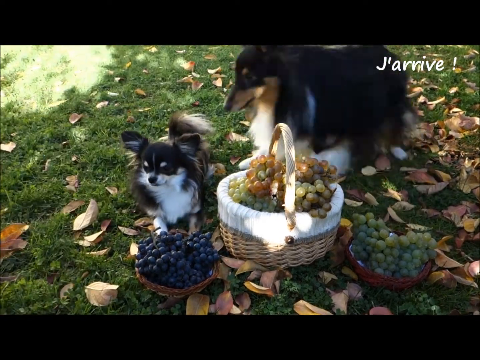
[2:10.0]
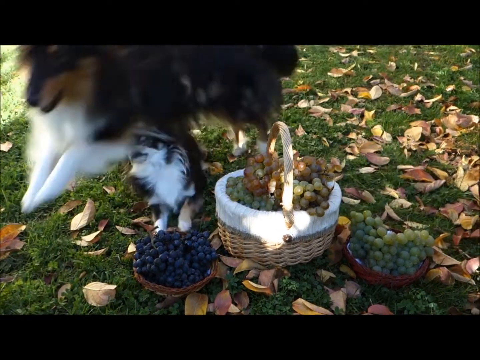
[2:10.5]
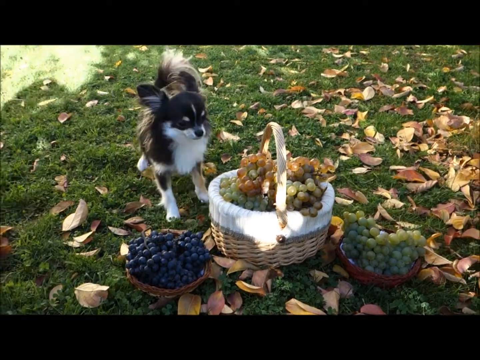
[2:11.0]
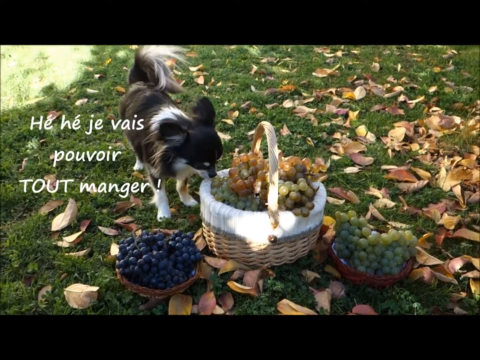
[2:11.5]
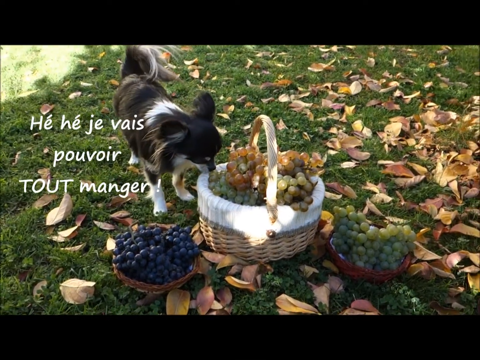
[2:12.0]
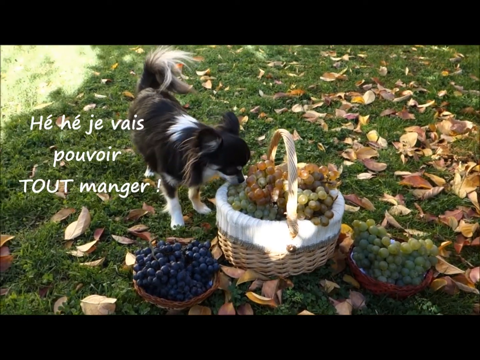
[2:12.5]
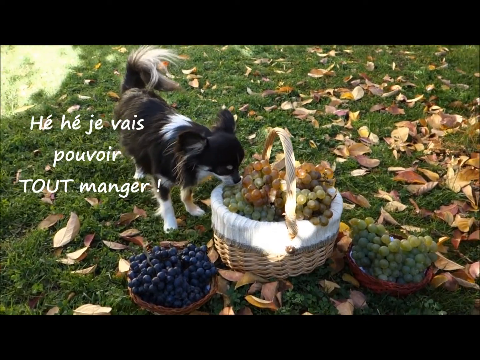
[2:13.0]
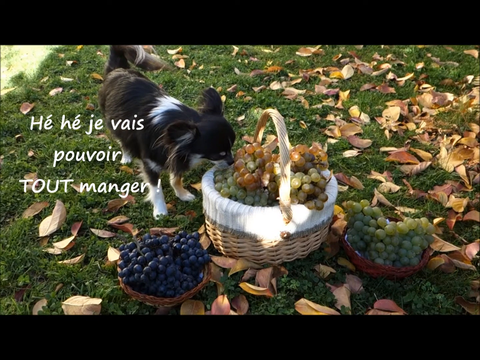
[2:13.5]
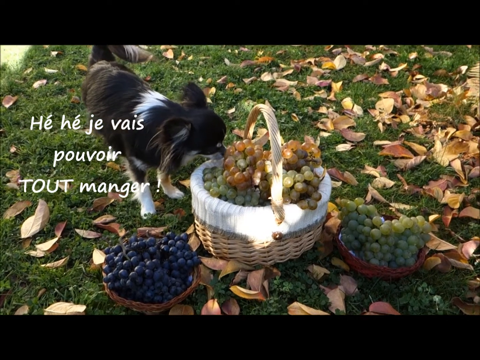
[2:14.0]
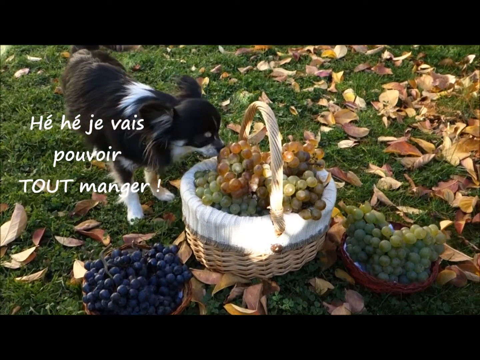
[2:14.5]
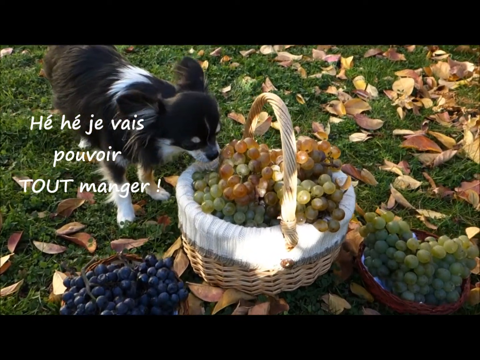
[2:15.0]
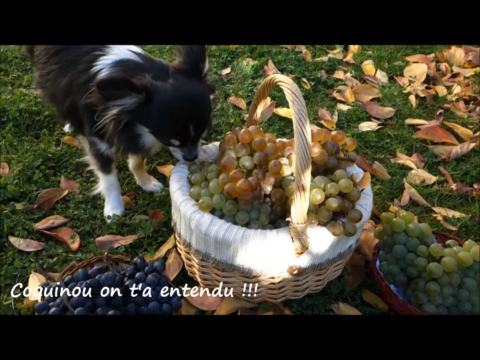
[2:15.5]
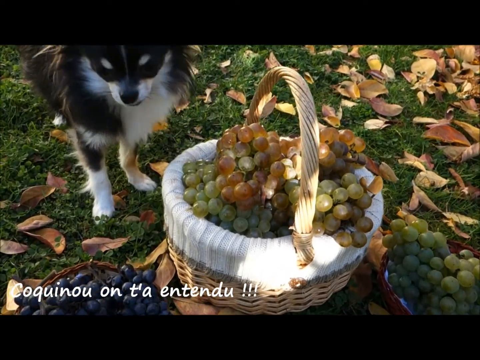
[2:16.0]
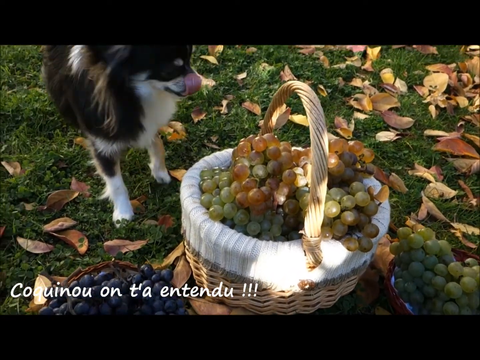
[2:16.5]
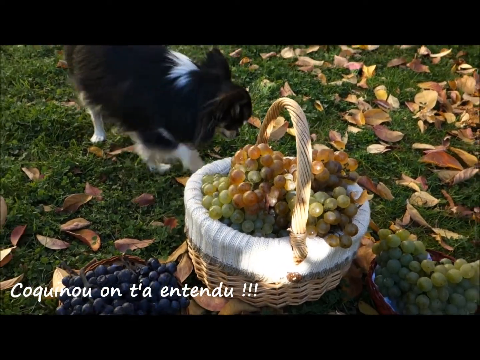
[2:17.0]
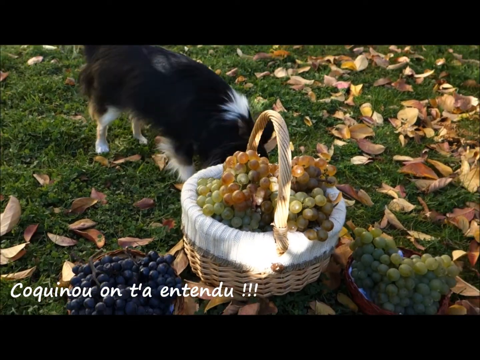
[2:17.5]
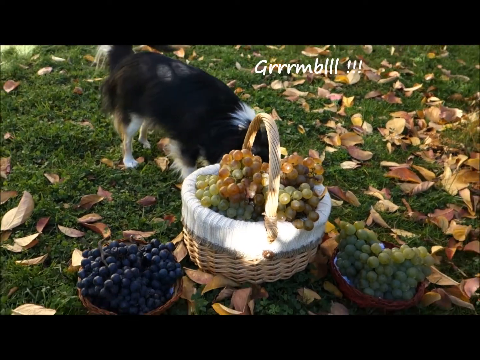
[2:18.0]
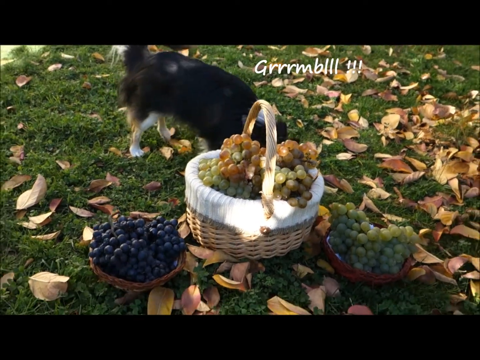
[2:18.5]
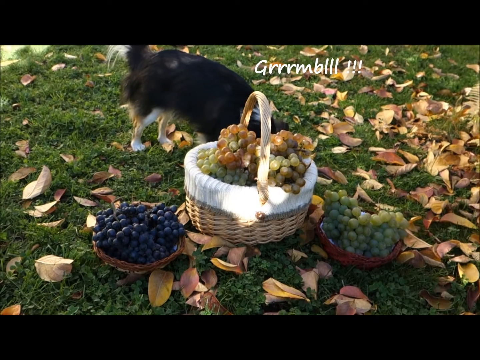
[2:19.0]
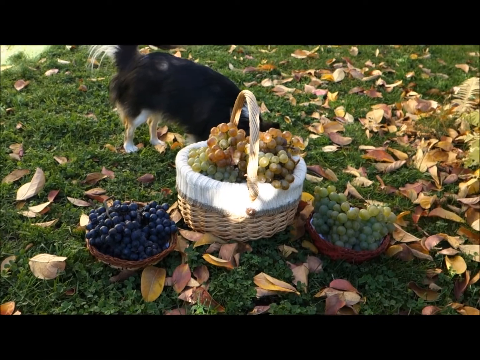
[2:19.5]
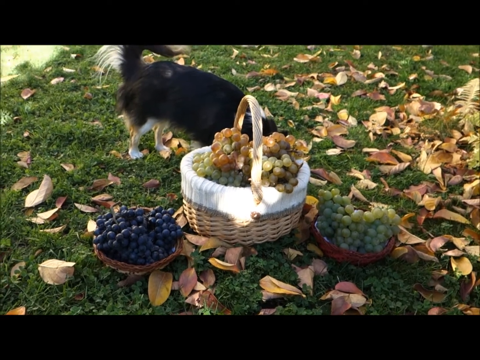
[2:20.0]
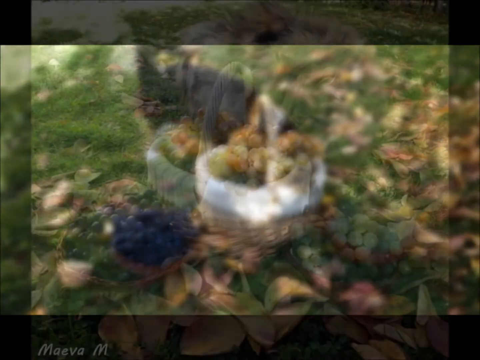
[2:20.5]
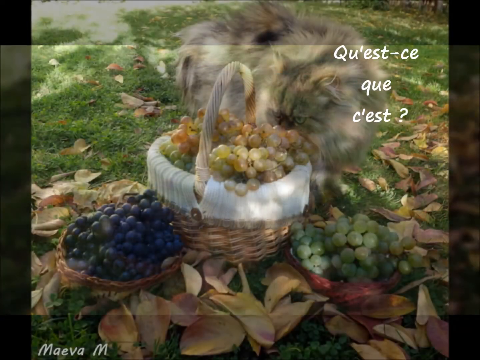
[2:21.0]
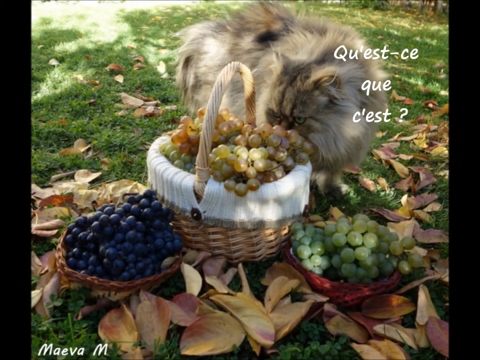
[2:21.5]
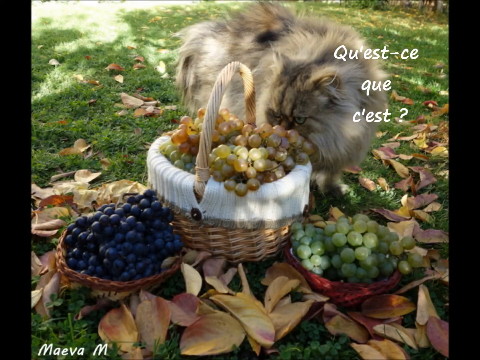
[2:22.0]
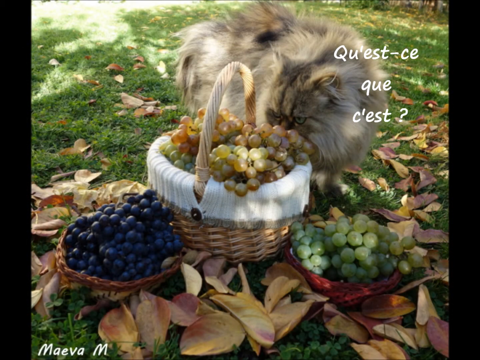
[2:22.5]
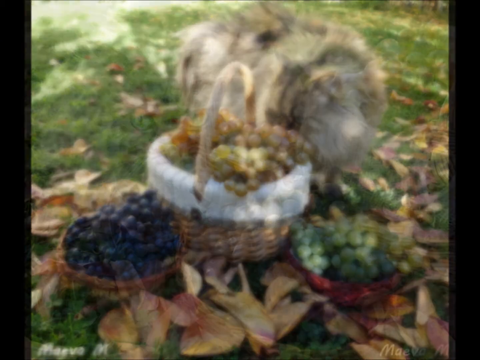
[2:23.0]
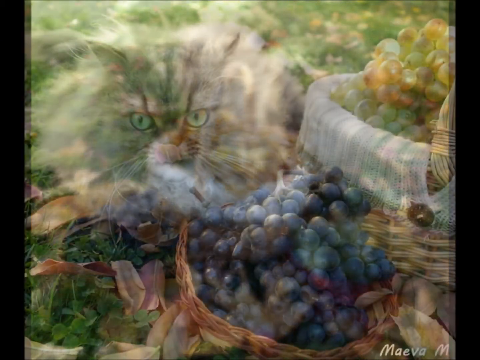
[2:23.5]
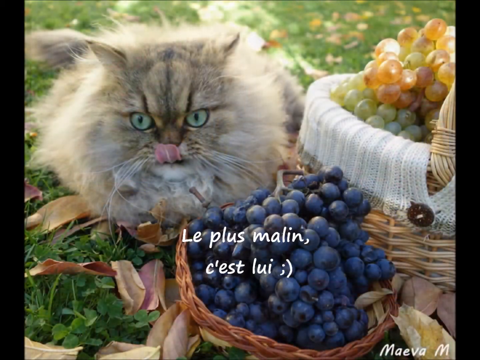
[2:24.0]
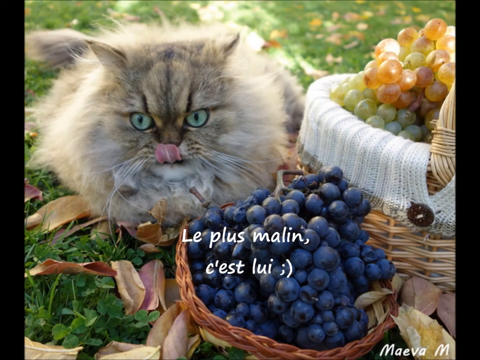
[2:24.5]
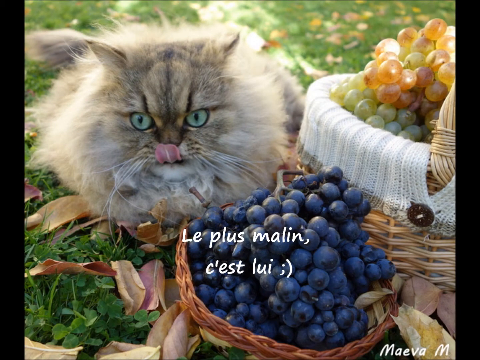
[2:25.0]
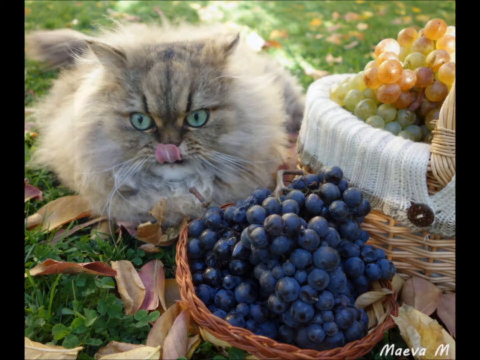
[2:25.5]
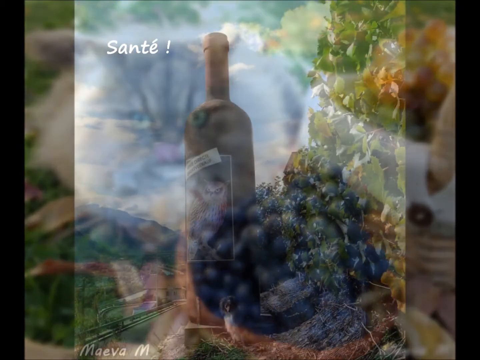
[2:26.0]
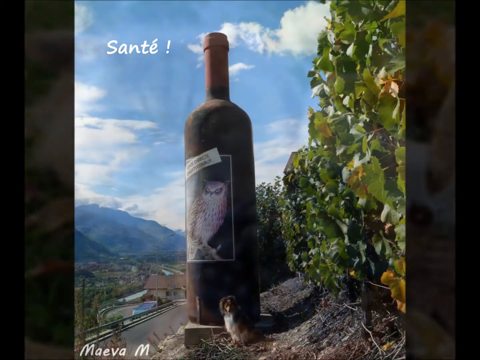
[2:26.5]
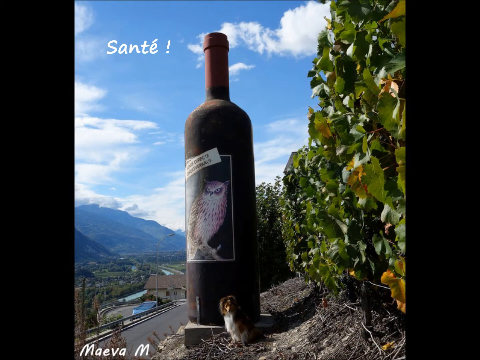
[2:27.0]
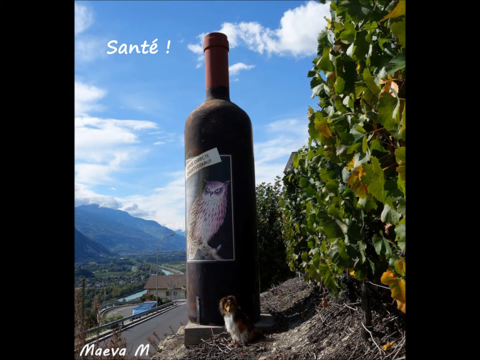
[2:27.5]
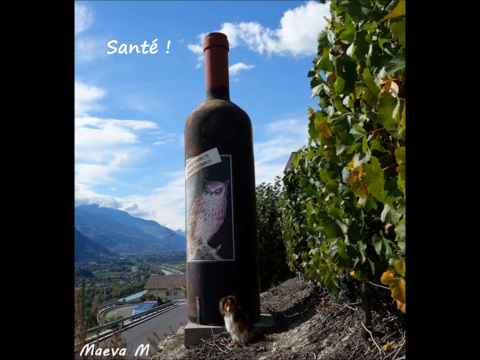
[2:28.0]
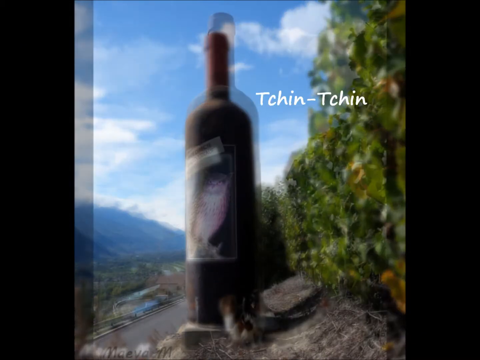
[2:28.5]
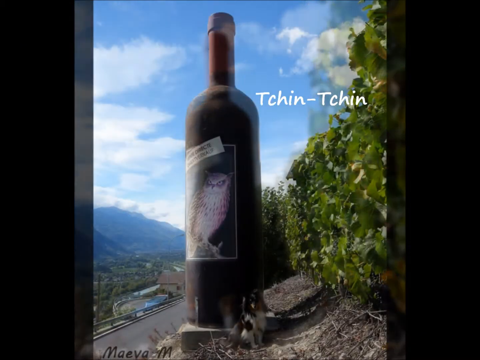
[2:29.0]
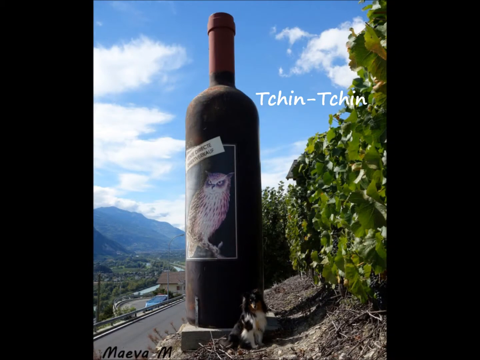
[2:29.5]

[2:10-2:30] The three dogs sit in the grass near the basket of grapes, with leaves around. There are two other baskets, like little plates of grapes, holding green grapes and more orangey grapes, as well as purple-red grapes. Lots of brown and orange leaves cover the ground. The little chihuahua sniffs the grapes and continues sniffing around on the ground and everywhere. A picture then shows a fluffy, long-furred, grayish-brown cat sniffing the basket of grapes in the middle. A close-up shows the cat in front of the two baskets of grapes; it has greenish eyes, small black markings on its nose and head, and is mostly grayish brown with some white. It licks its nose and lips with its tongue out. A picture of a bottle of wine against the sky then appears with text.